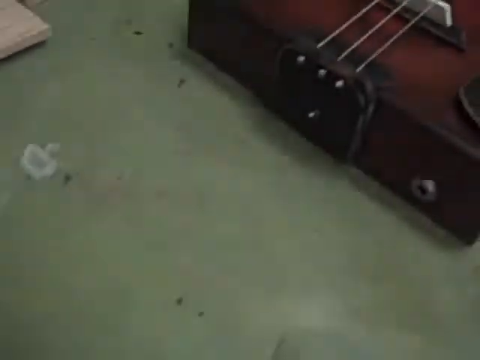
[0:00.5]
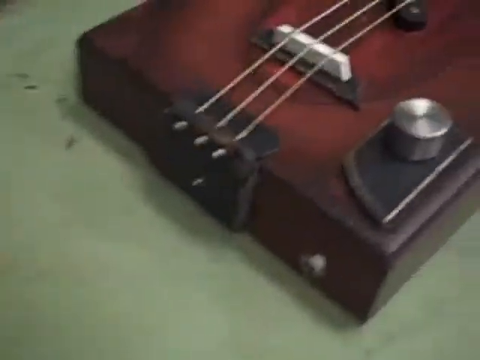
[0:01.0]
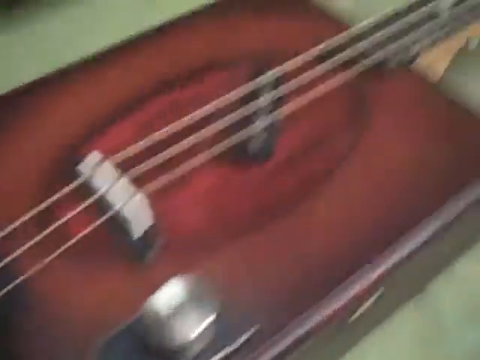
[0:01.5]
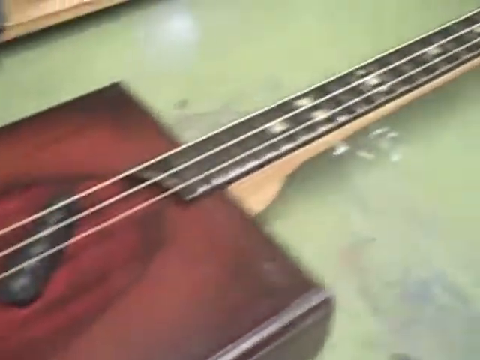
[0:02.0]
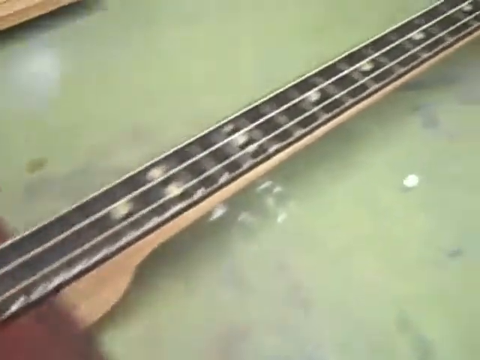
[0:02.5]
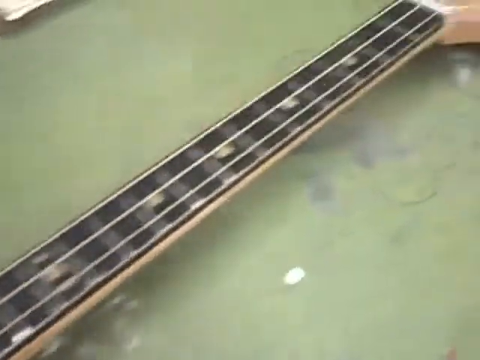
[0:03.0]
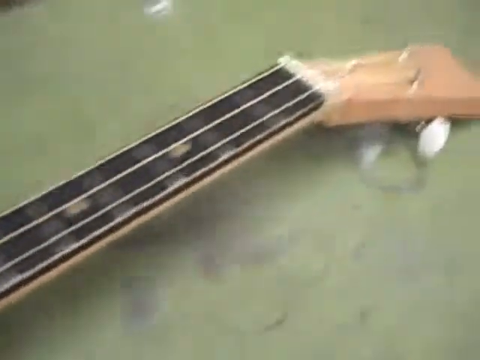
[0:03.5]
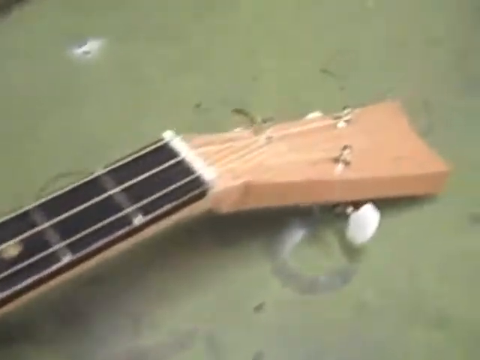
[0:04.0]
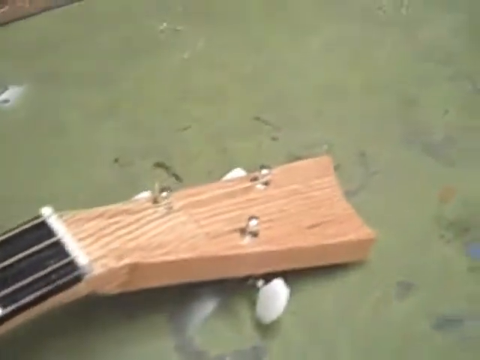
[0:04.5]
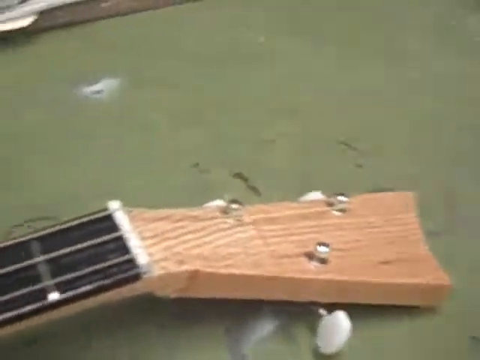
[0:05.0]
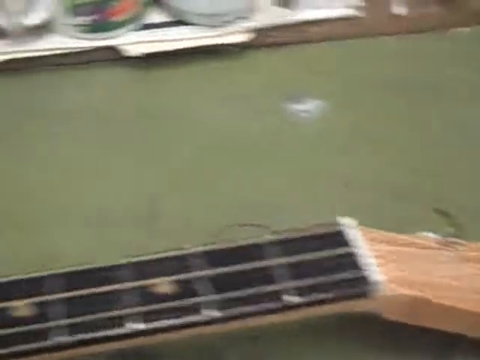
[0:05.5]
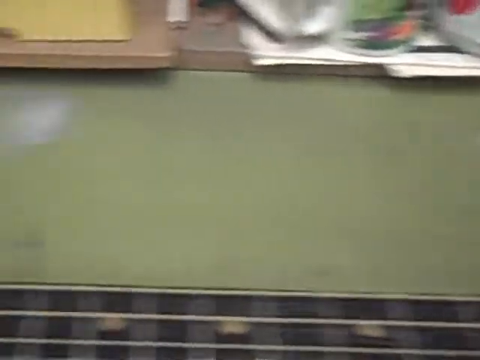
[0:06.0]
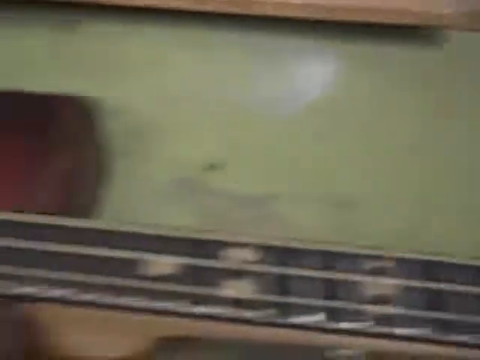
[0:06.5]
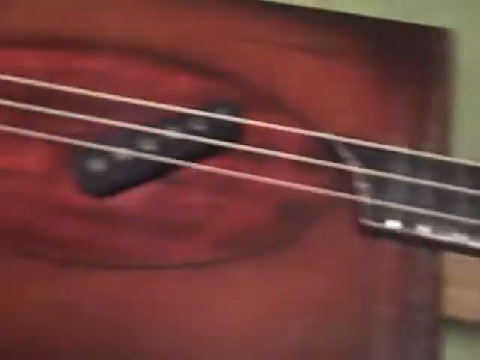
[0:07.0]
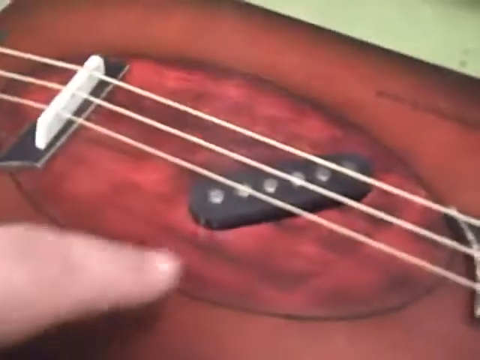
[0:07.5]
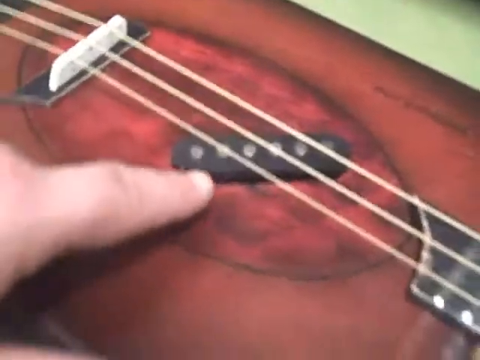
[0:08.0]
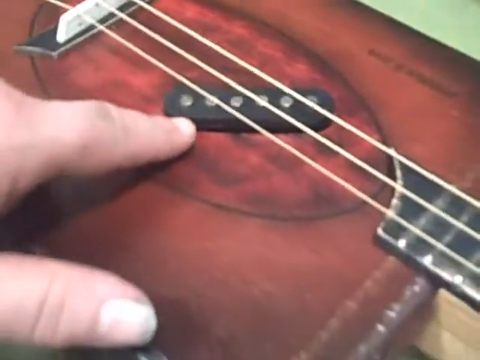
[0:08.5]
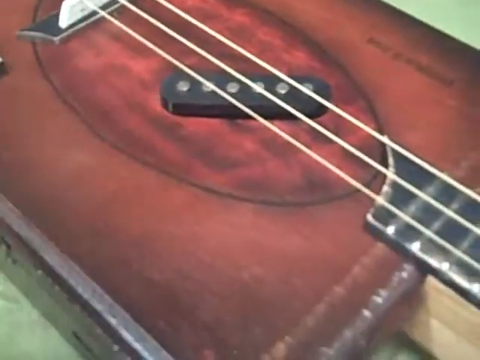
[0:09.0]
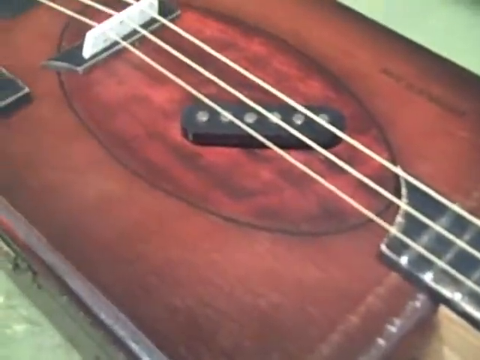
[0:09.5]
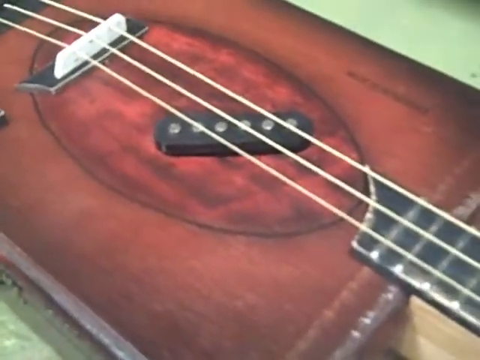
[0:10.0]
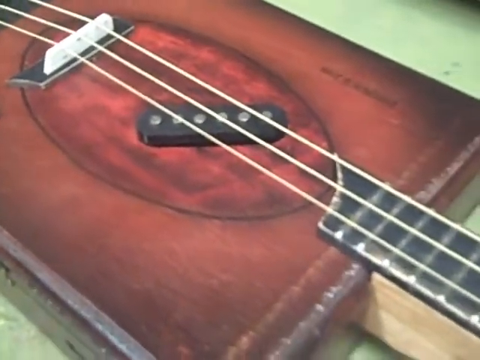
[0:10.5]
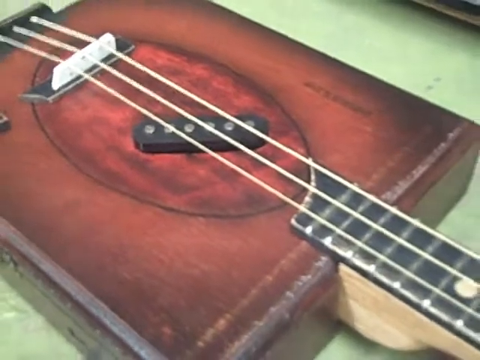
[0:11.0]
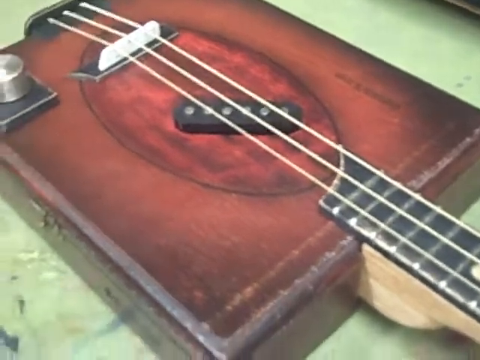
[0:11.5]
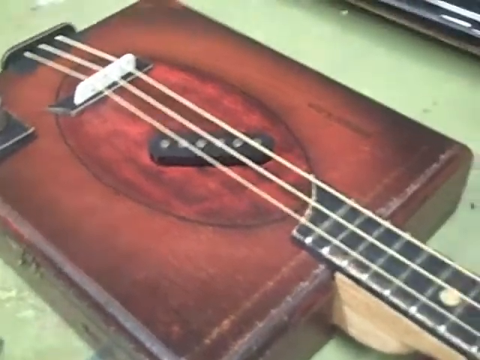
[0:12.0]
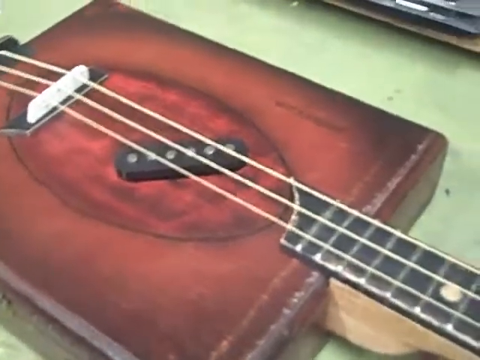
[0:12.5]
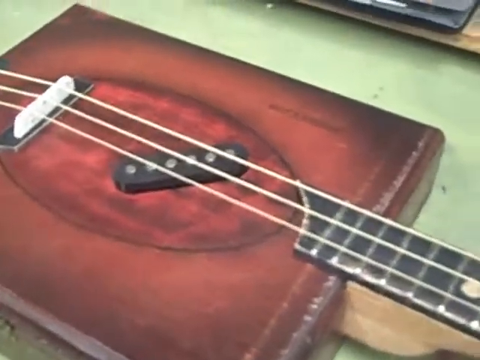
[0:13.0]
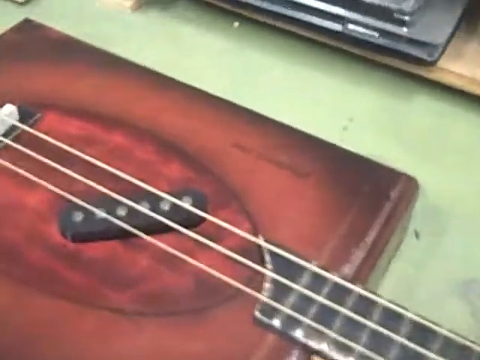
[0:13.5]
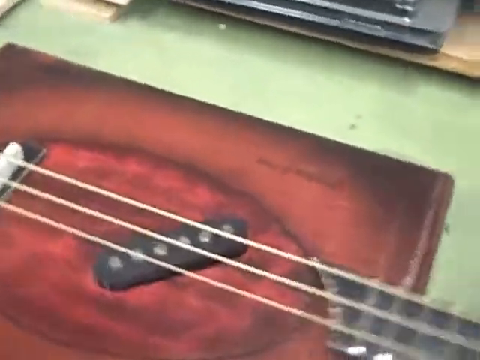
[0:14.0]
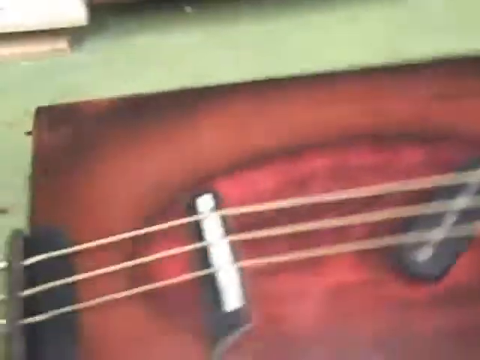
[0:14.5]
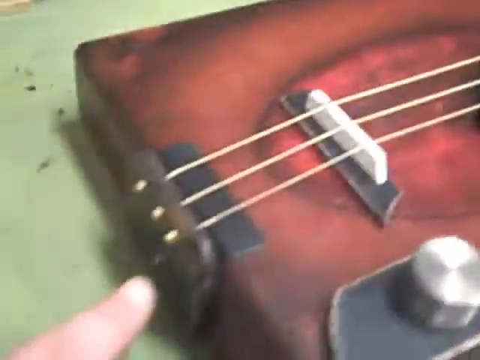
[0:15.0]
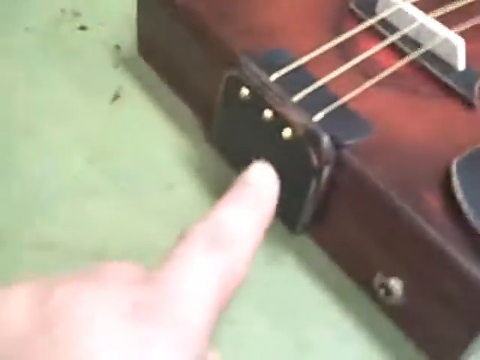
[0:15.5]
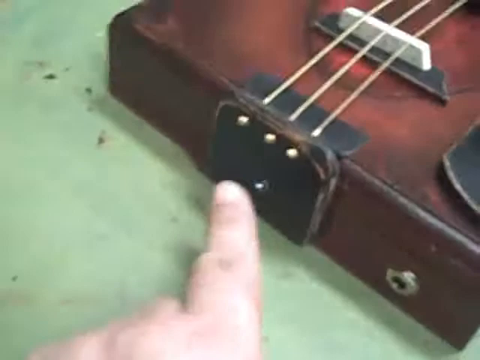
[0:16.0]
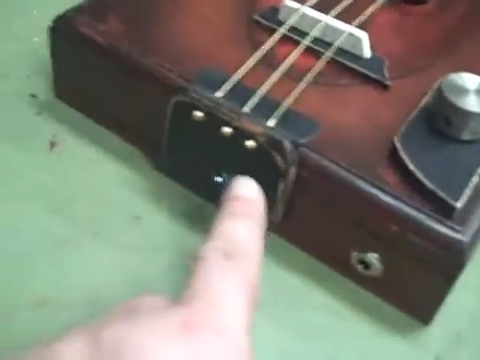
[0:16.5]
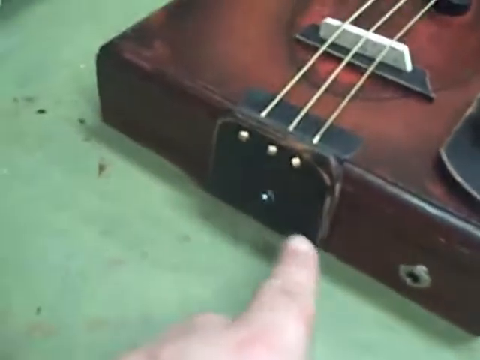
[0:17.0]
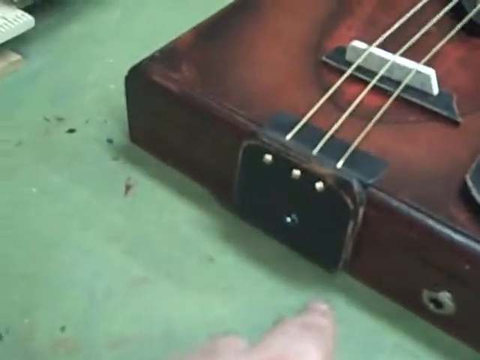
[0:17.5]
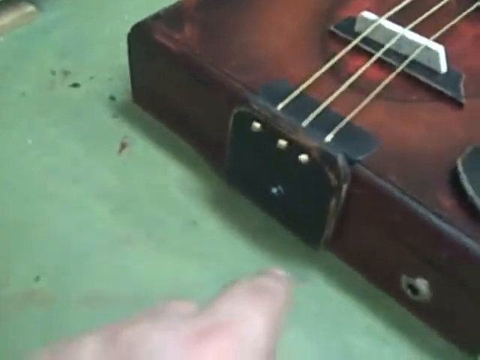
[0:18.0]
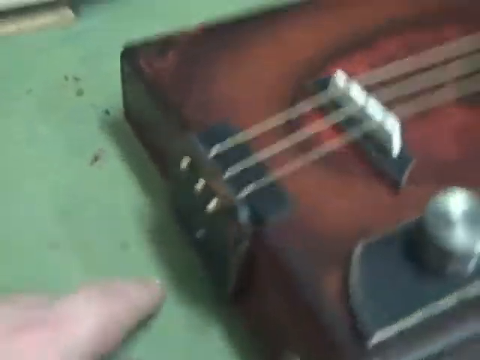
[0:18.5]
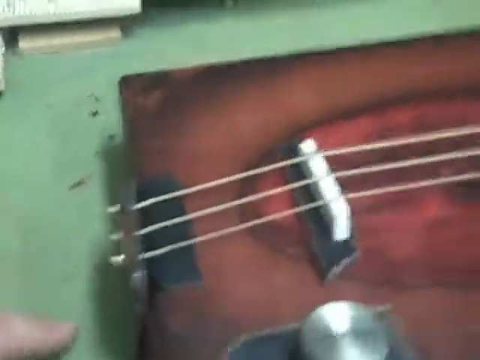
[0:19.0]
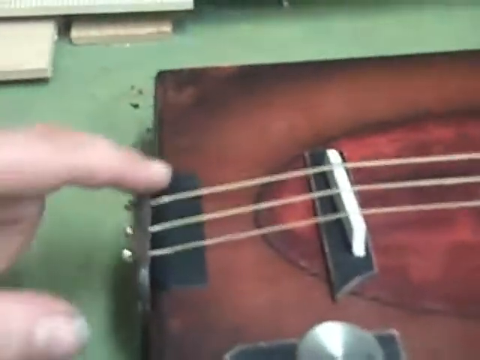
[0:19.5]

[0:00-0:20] The video shows what seems to be a homemade guitar; it does not look like a normal guitar. The person recording first shows the very top of the guitar, where the strings are tuned, then slowly moves all the way down to the bottom. A finger points to the center of the guitar, the part where a guitar normally has a hole, but this one has no hole, so it is probably homemade rather than a store-bought or professional guitar. The camera scrolls down further and shows where the strings end. There are three strings.